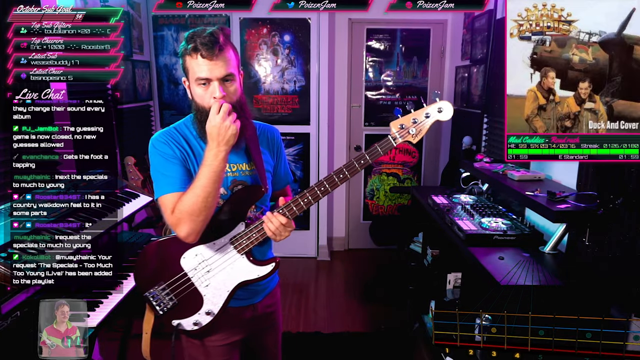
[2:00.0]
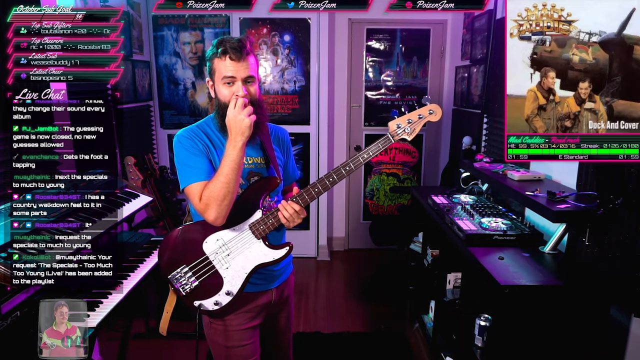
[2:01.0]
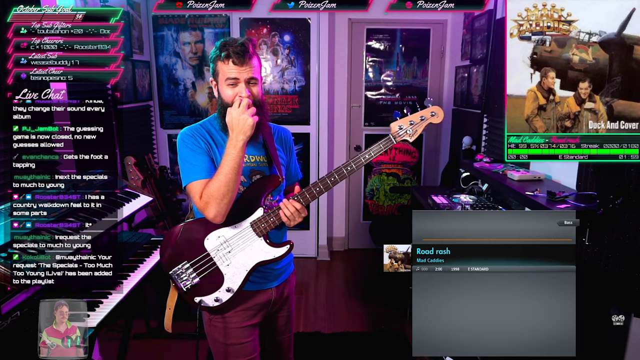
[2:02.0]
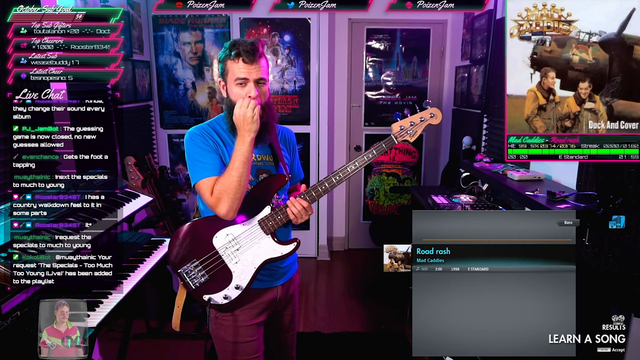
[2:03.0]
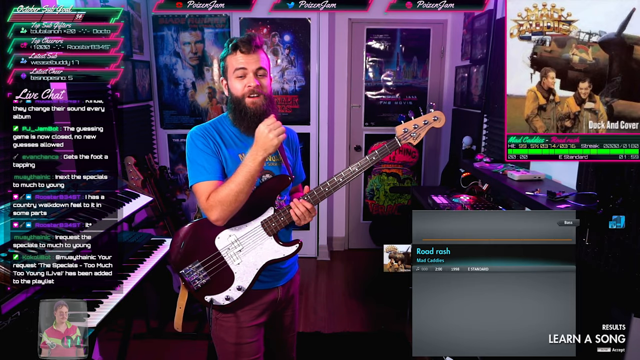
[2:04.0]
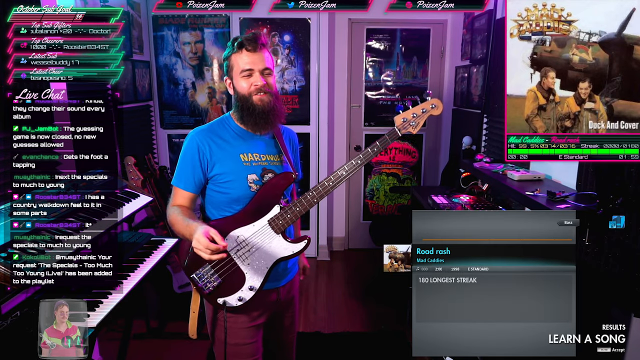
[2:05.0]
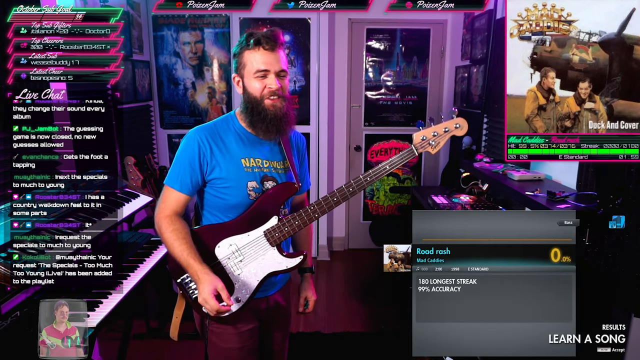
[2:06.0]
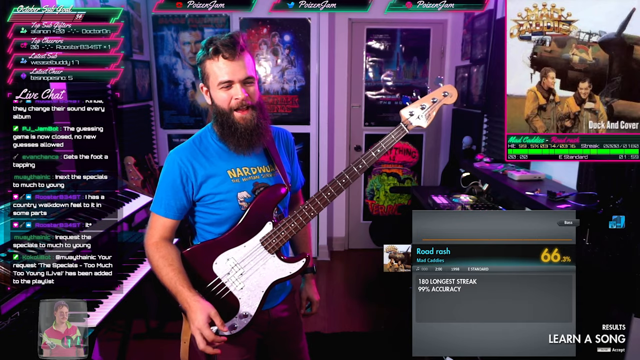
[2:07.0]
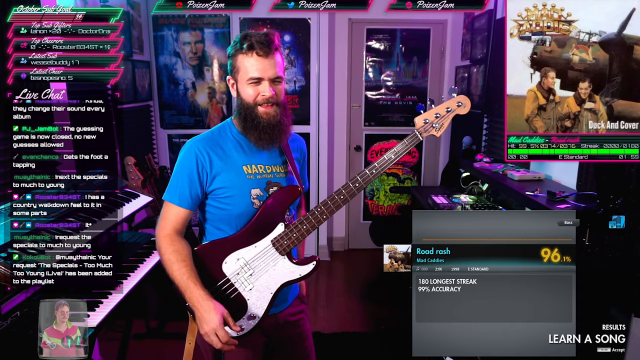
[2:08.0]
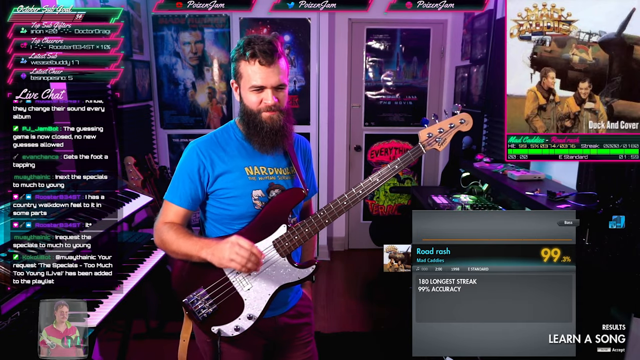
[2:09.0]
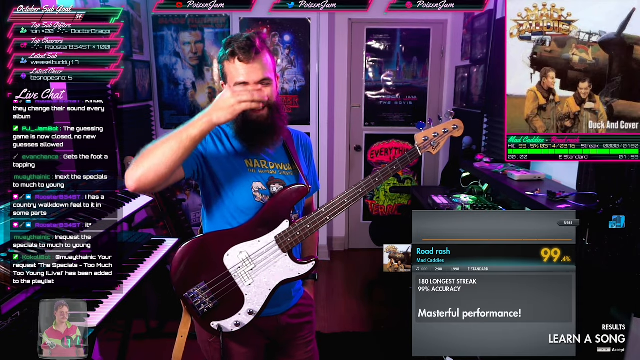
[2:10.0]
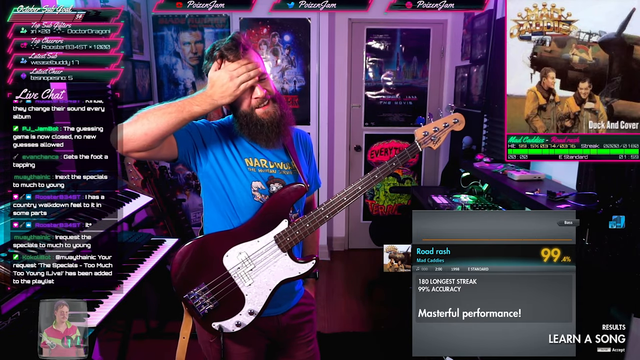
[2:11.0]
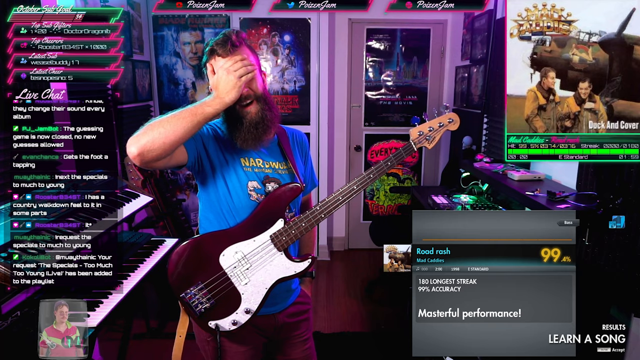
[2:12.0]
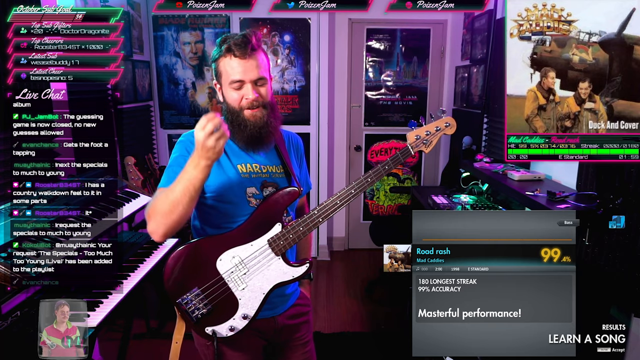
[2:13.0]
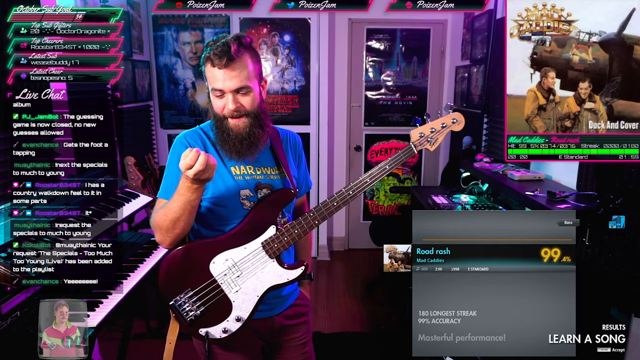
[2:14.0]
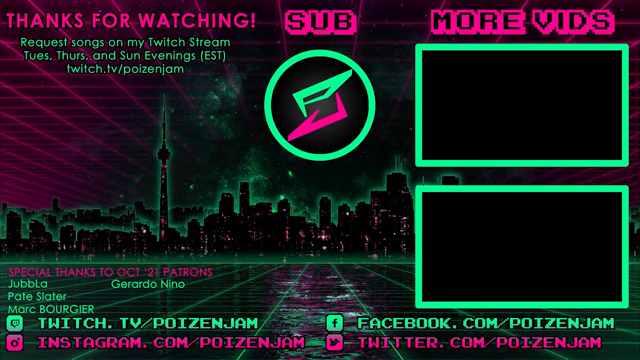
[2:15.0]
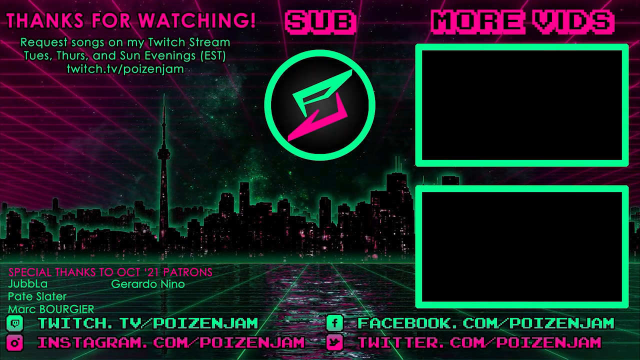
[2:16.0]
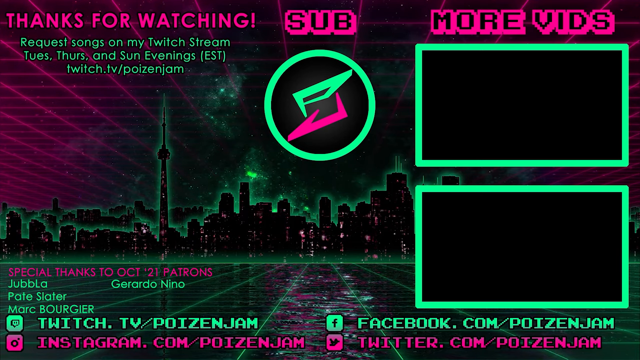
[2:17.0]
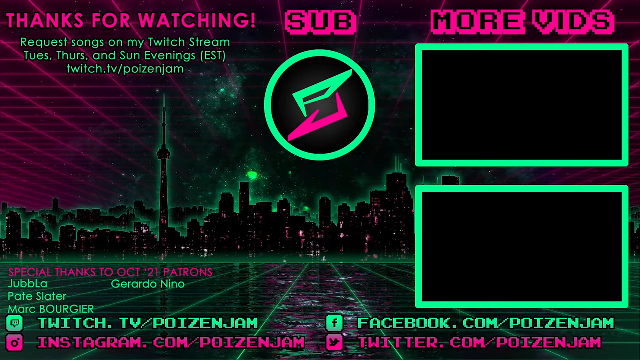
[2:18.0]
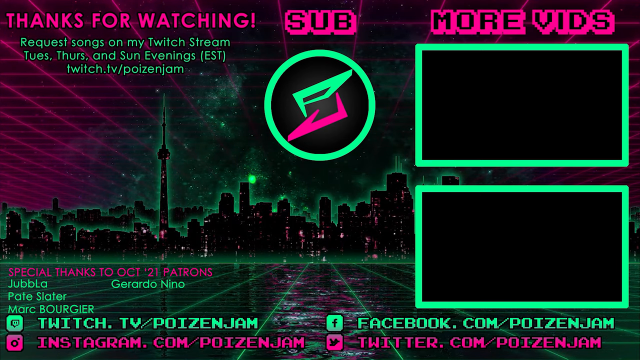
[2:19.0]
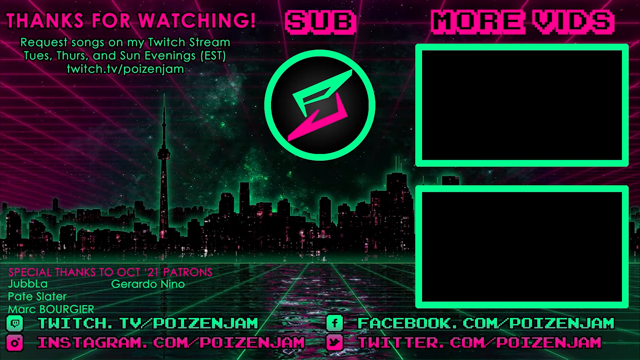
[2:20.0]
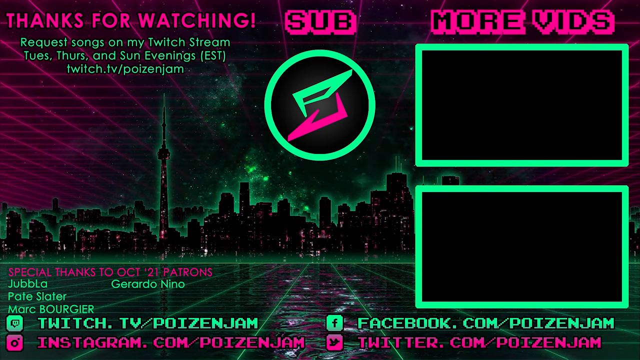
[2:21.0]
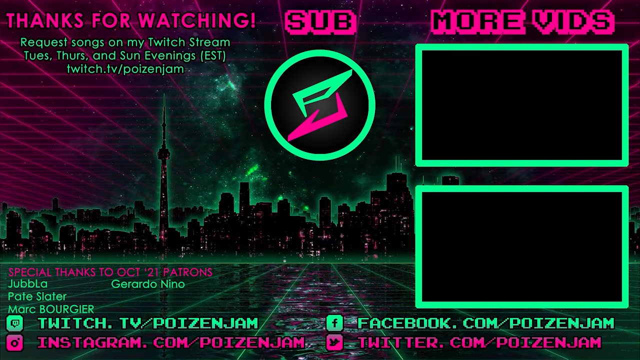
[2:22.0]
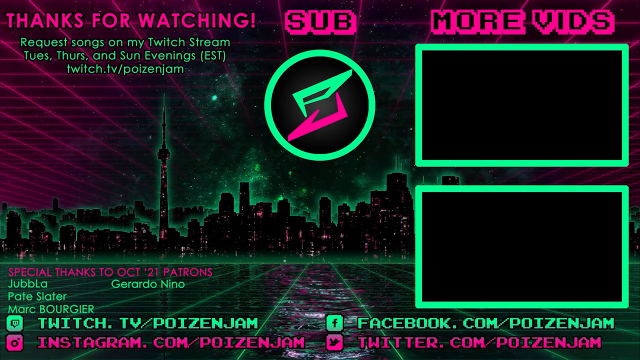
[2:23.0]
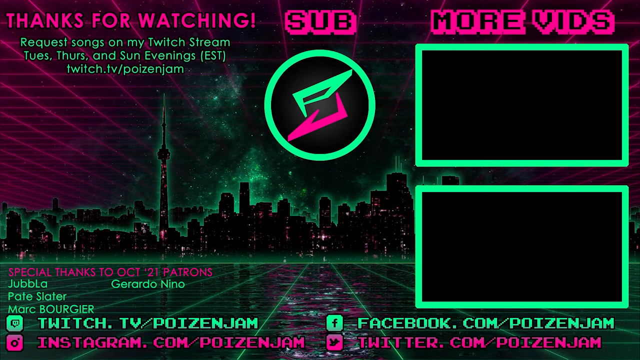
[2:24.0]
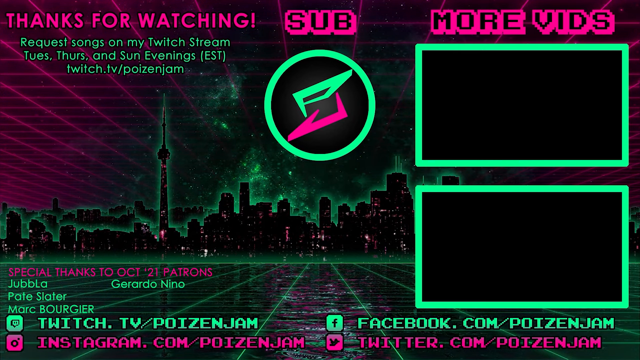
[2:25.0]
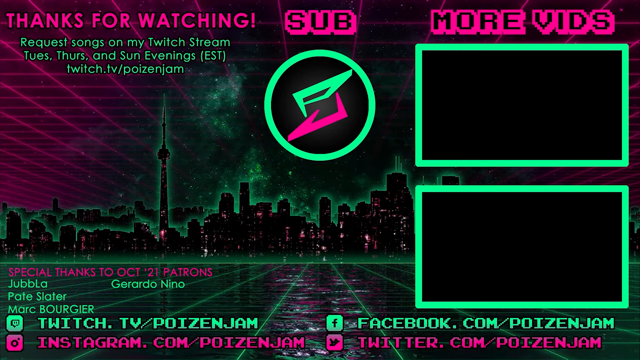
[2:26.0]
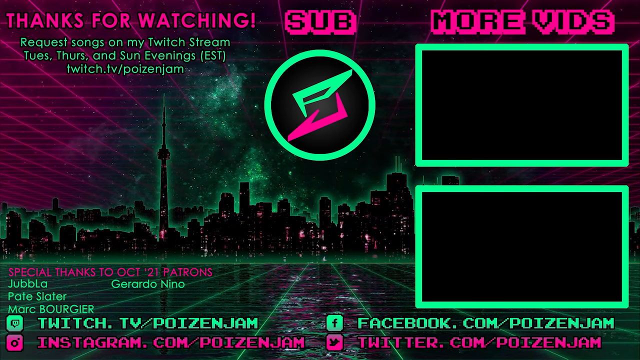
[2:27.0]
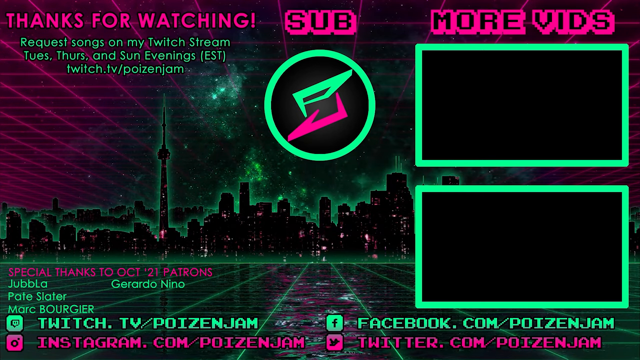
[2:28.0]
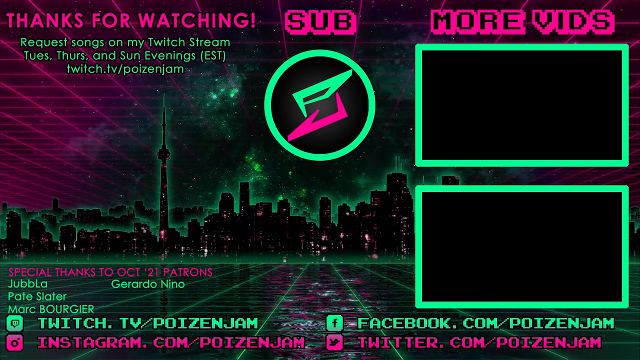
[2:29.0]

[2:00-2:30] He talks and interacts with the chat, looking at the screen, and looks happy. In the bottom right-hand corner of the screen, an animation says "road rash" with 99.4%. The video then goes into neon ending credits showing social handles, suggesting the stream is probably on Twitch.